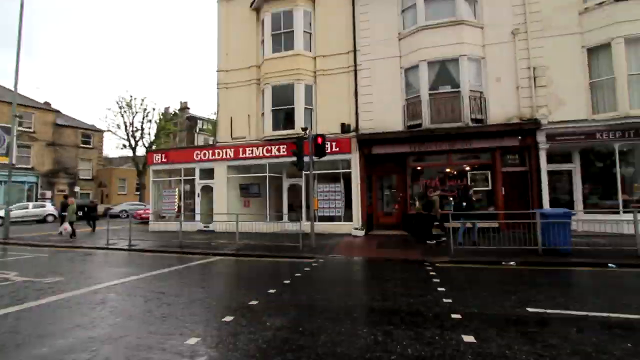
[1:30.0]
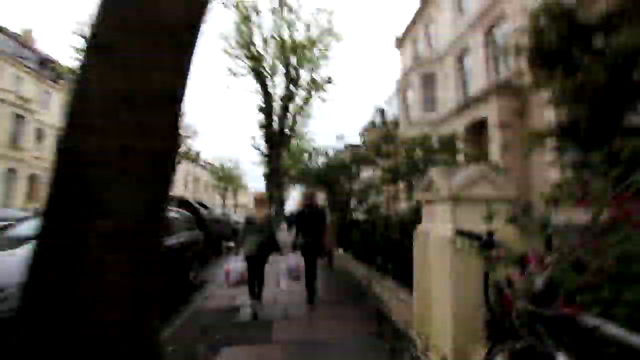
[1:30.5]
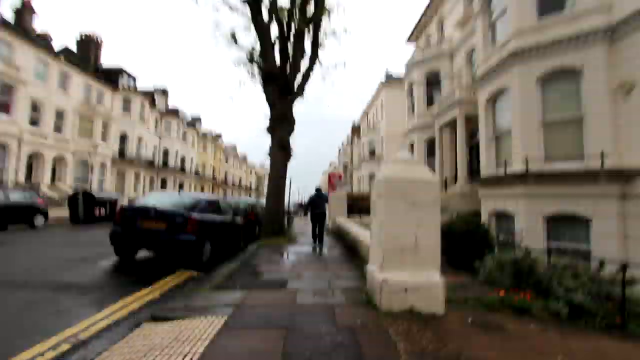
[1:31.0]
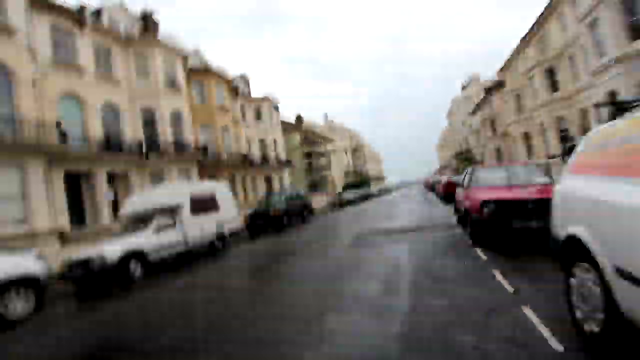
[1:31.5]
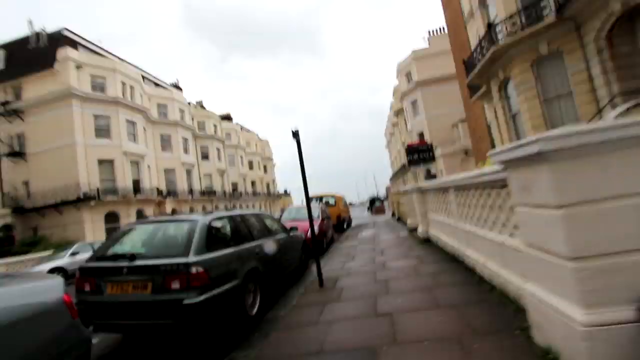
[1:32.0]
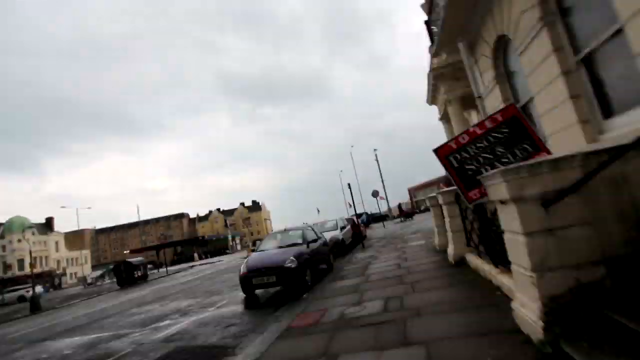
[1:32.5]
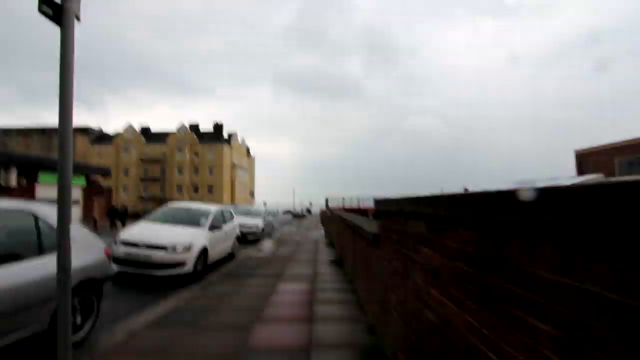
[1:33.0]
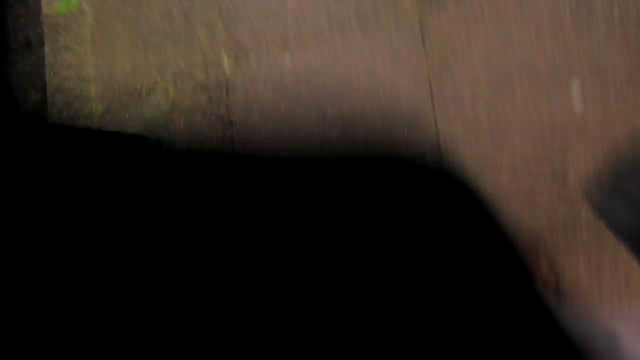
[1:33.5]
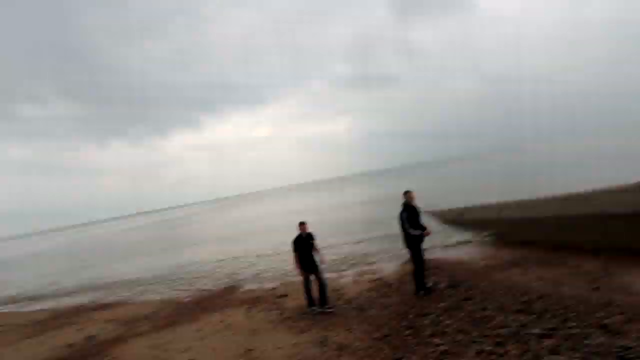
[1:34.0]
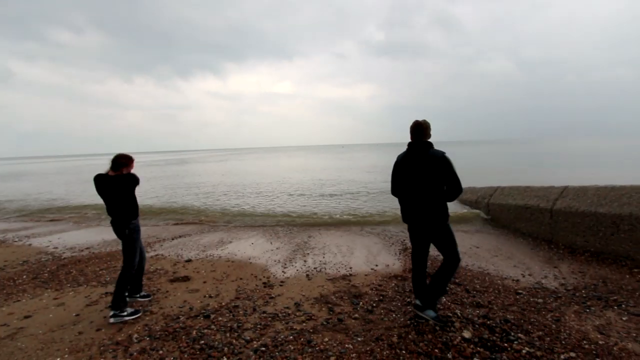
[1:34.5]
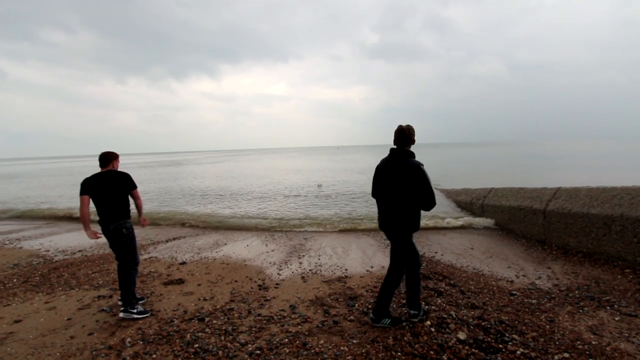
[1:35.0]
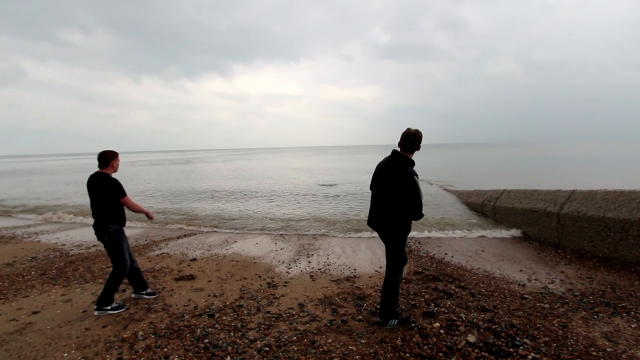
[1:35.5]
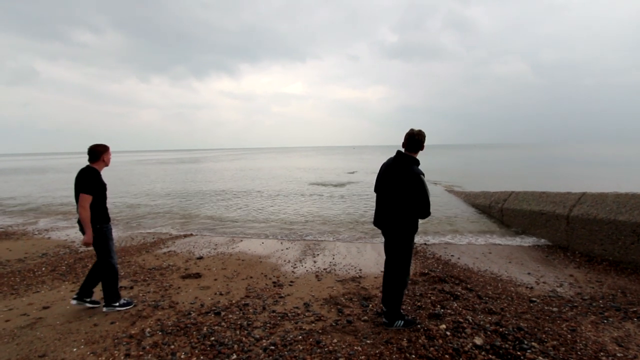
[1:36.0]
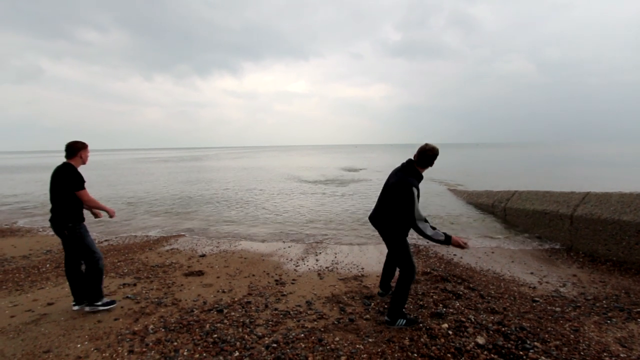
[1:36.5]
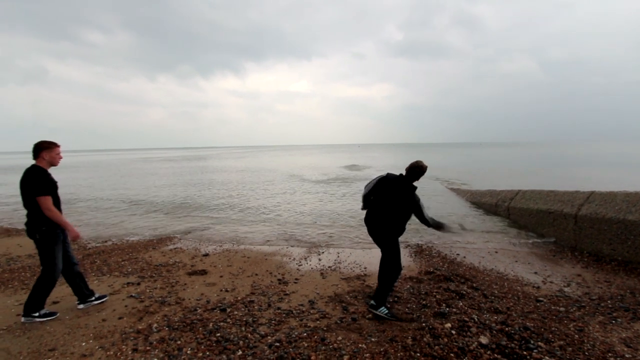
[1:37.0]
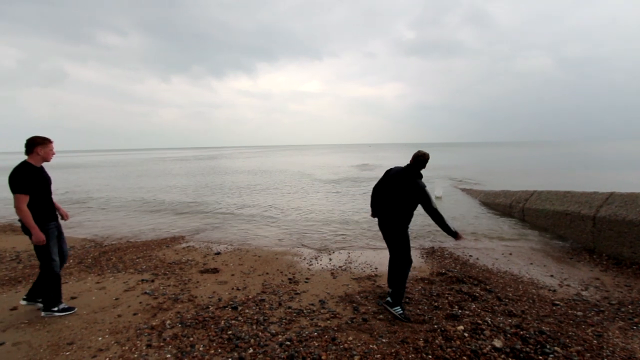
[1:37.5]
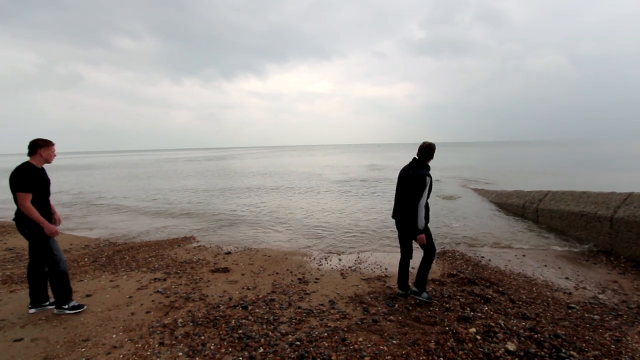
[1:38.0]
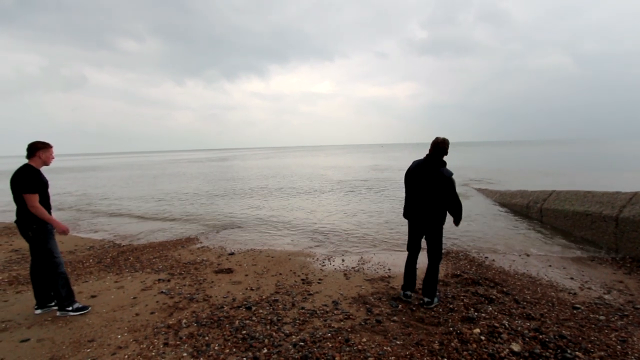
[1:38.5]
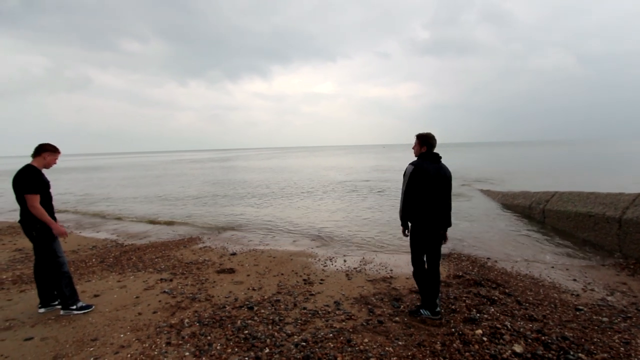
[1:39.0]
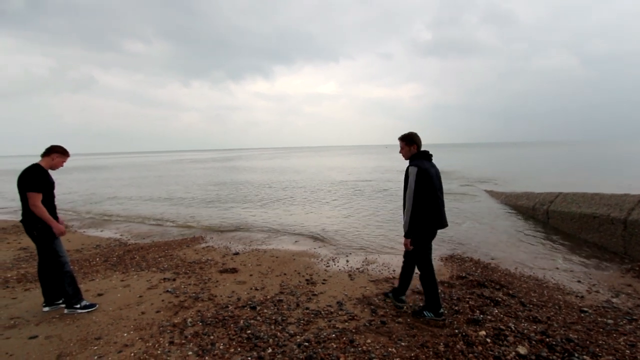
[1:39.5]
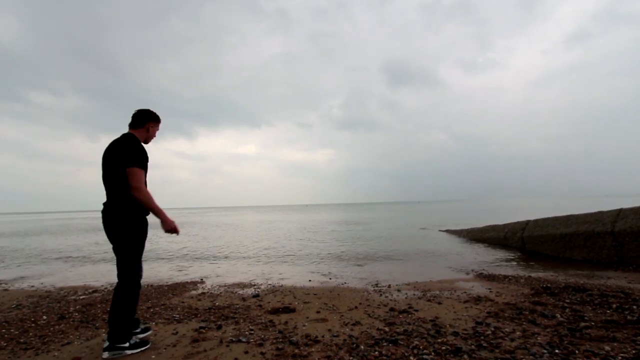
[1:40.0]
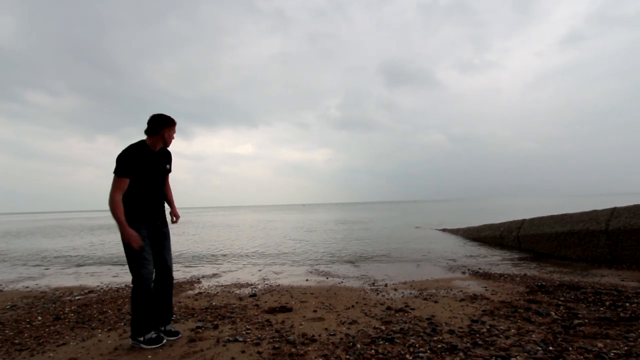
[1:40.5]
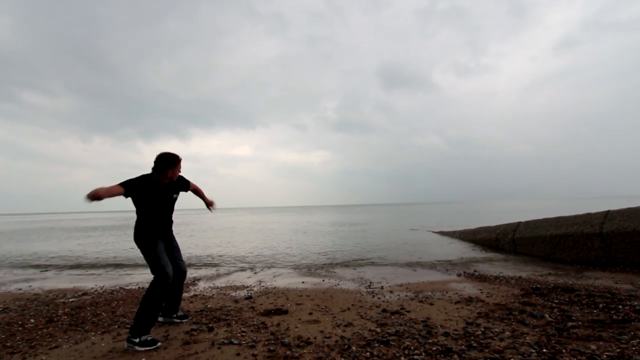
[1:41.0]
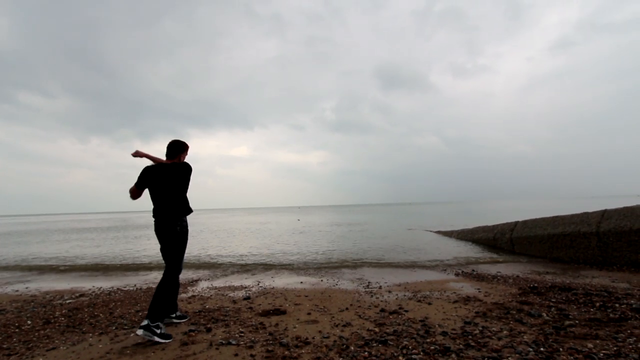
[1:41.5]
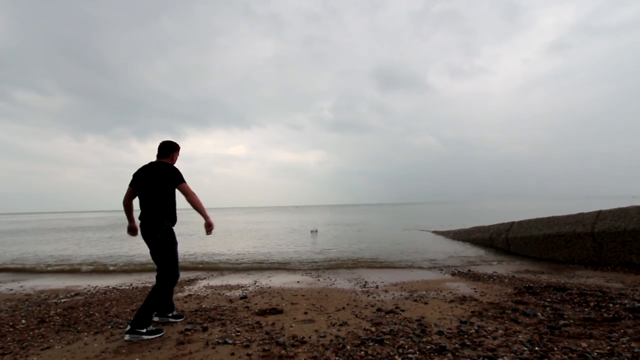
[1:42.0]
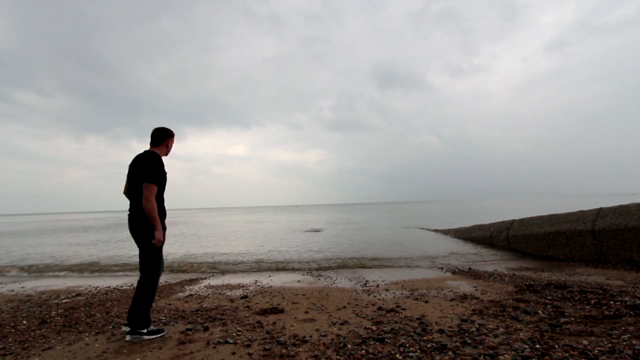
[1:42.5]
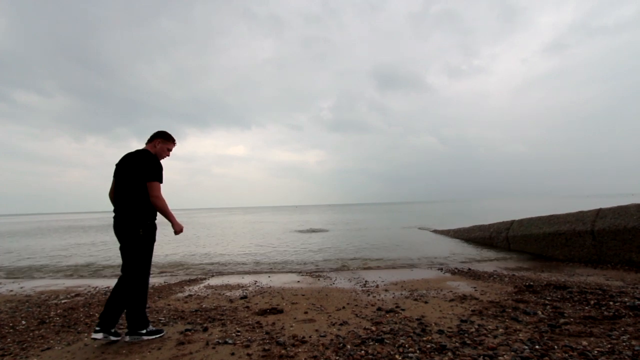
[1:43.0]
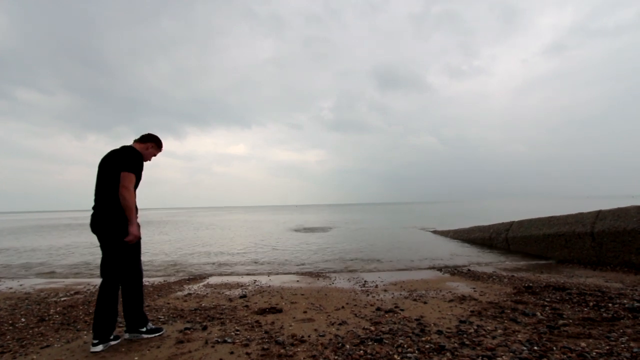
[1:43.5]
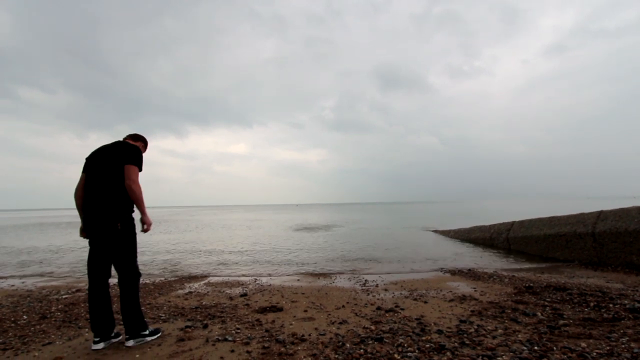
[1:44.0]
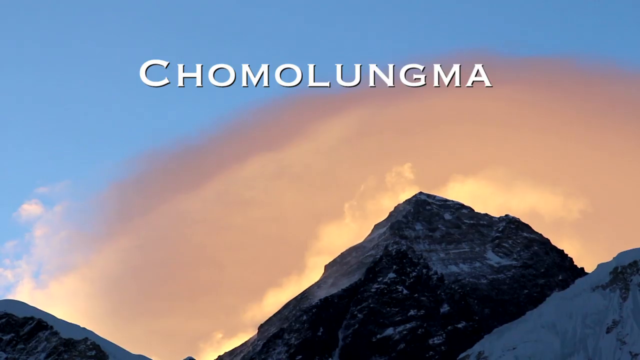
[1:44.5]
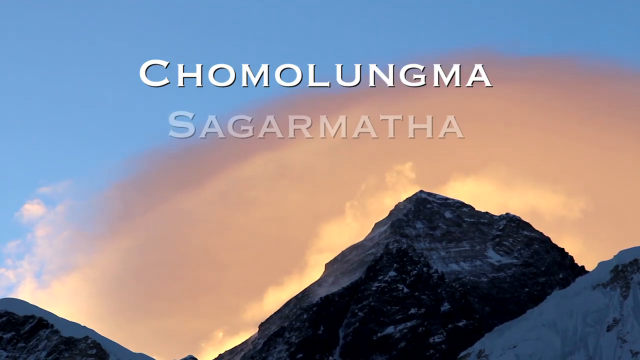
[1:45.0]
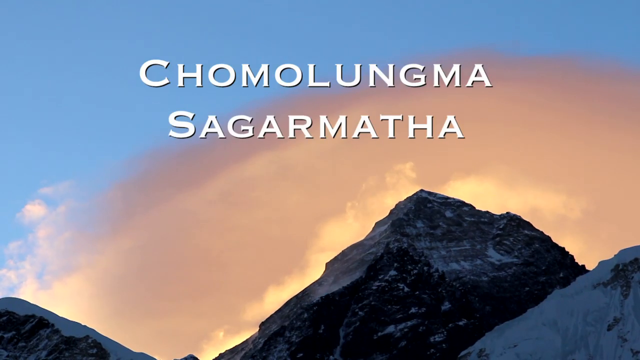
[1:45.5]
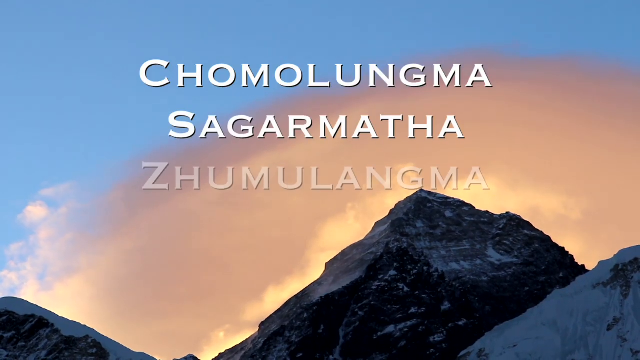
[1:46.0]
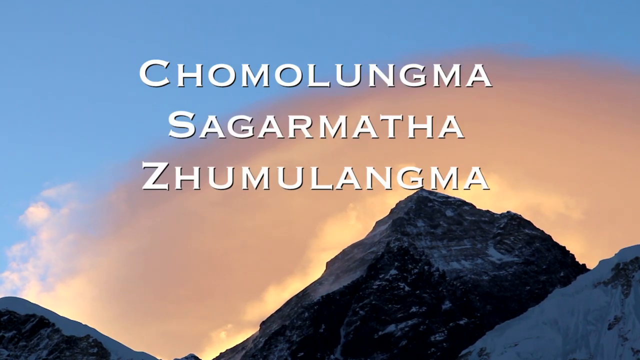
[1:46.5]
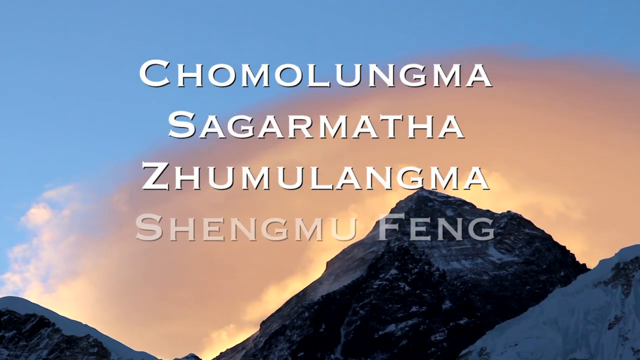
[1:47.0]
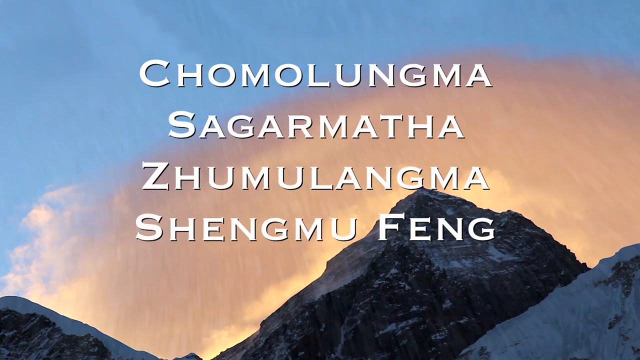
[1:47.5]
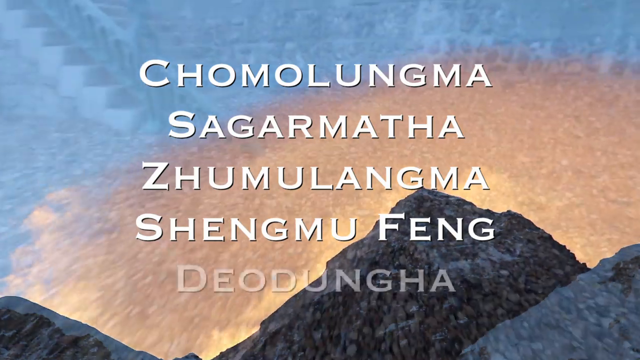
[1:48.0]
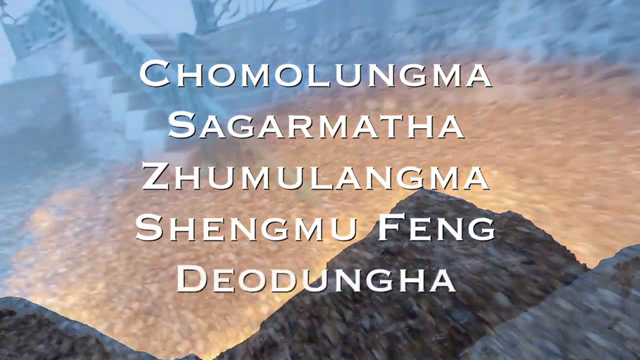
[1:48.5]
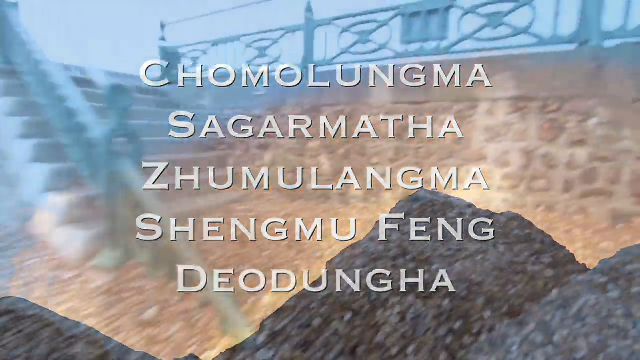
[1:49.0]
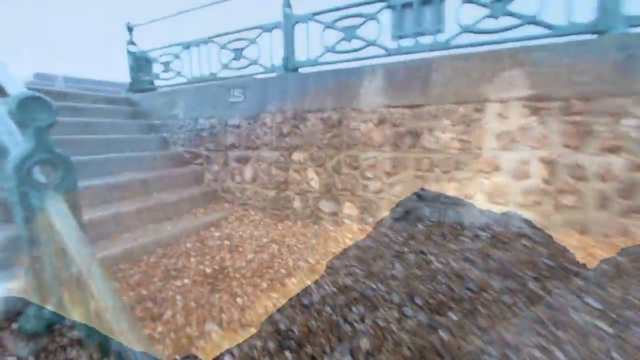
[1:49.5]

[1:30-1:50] Rapid, quick-cut footage races through a city or town, presumably in England, toward the seaside. Two men stand on a muddy beach close to the sea, throwing with their right arms as they try to skip stones into the water; the man on the right wears a long-sleeved vinyl jacket and the man on the left a short-sleeved shirt. One shot shows the two men and another shows a man alone. The video jumps to an image of mountains and sky with the names of five mountains on top in bold white font, including "Chomolungma," "Sagarmatha" second, and one starting with Z. The video alternates between the trip through the city, the stone skipping and the mountain names.